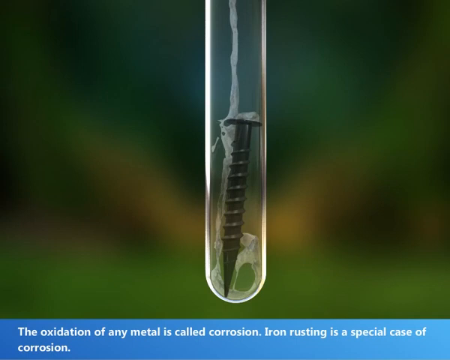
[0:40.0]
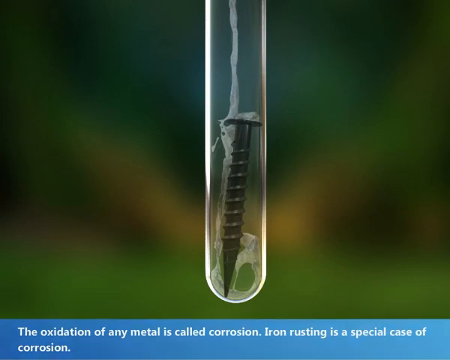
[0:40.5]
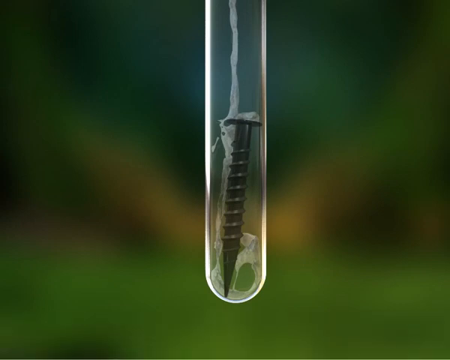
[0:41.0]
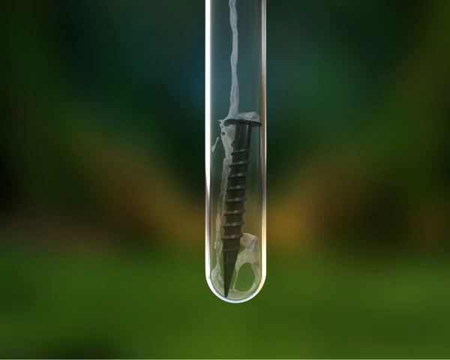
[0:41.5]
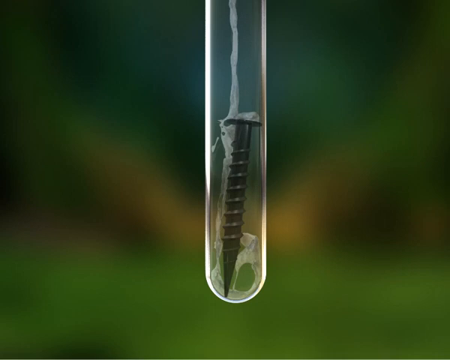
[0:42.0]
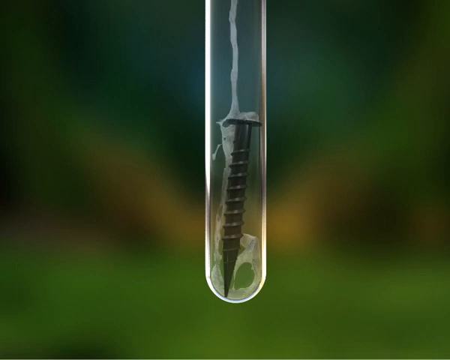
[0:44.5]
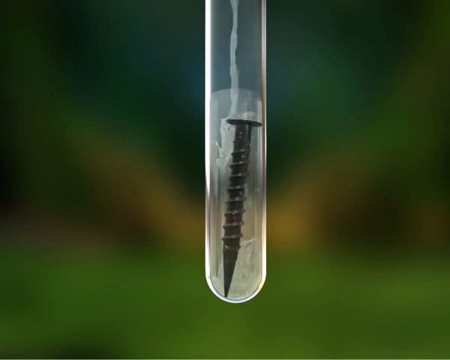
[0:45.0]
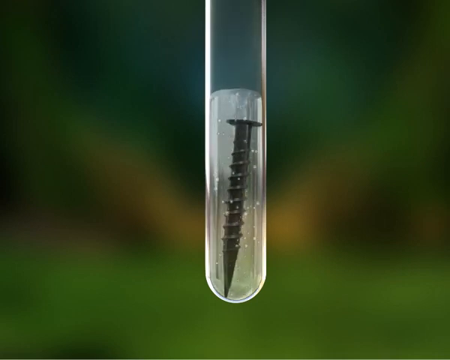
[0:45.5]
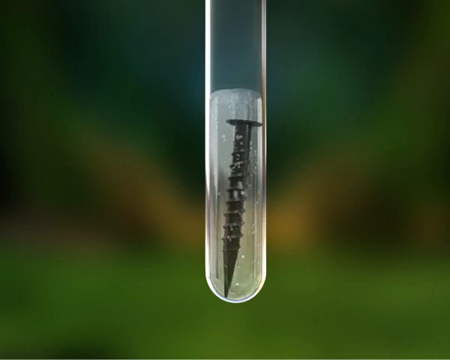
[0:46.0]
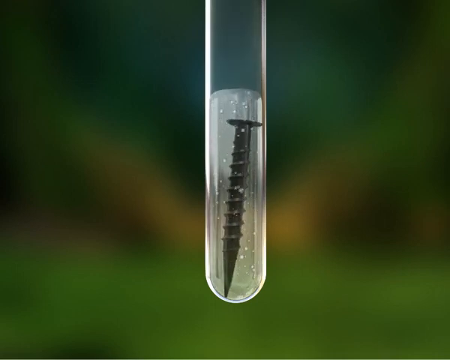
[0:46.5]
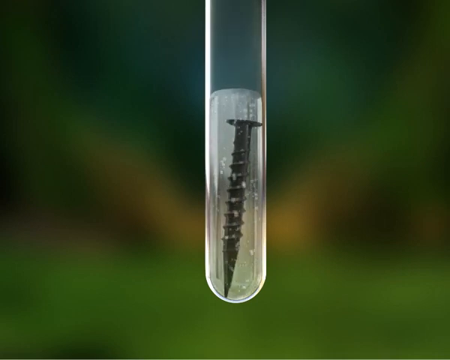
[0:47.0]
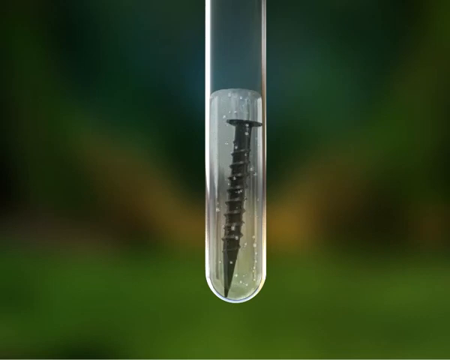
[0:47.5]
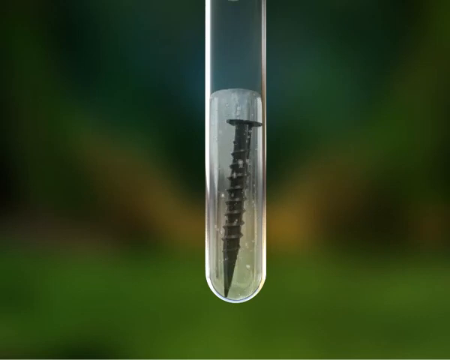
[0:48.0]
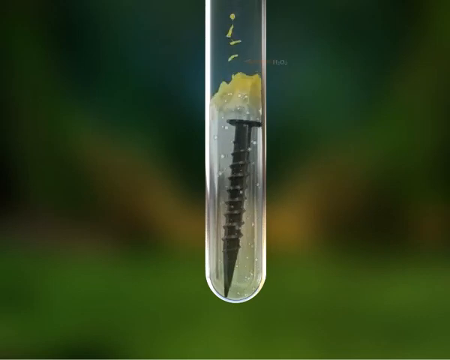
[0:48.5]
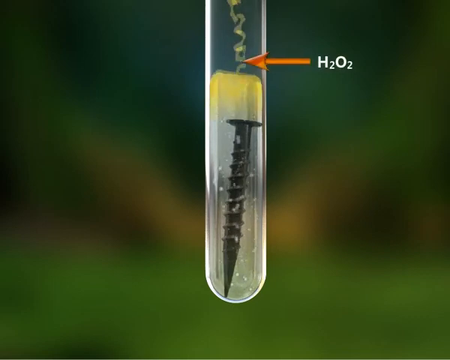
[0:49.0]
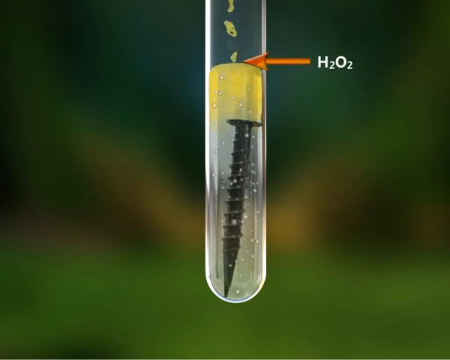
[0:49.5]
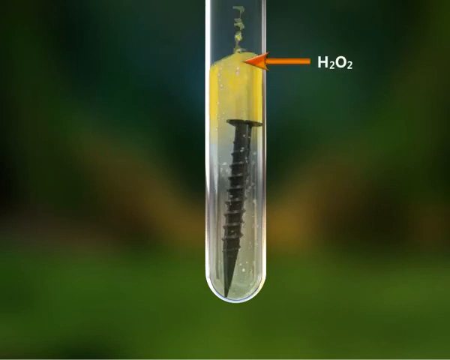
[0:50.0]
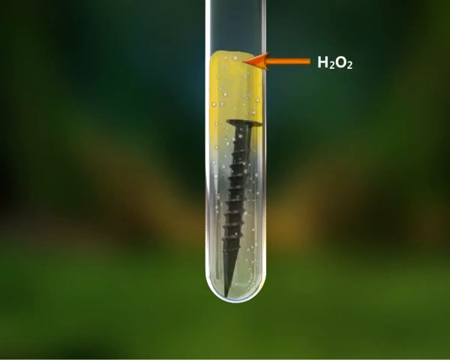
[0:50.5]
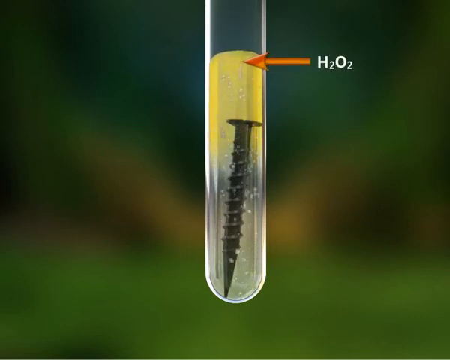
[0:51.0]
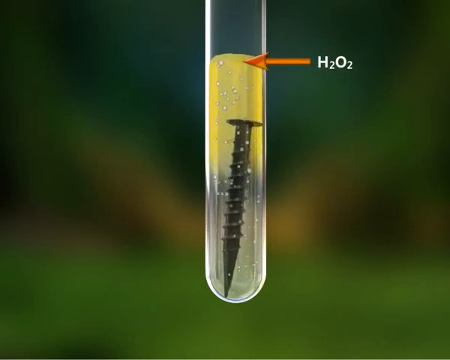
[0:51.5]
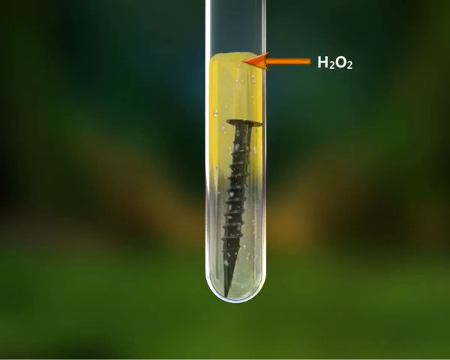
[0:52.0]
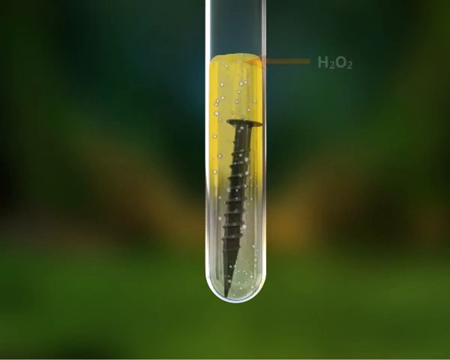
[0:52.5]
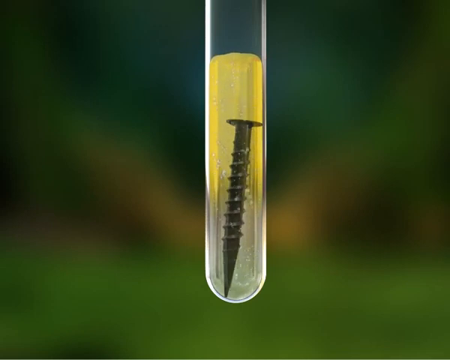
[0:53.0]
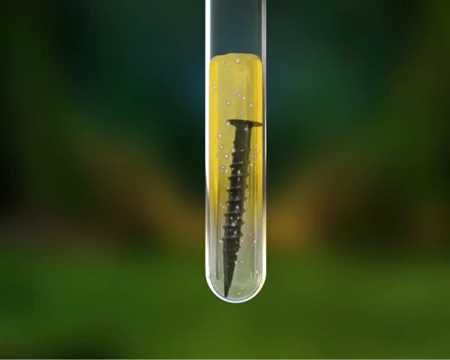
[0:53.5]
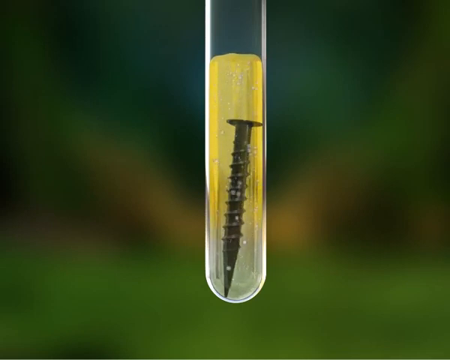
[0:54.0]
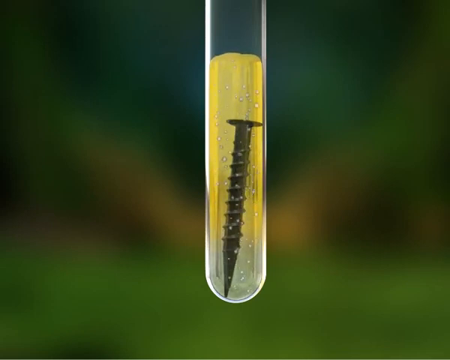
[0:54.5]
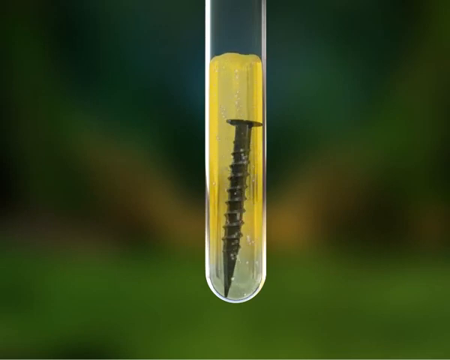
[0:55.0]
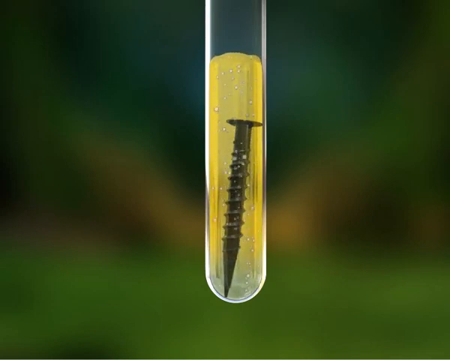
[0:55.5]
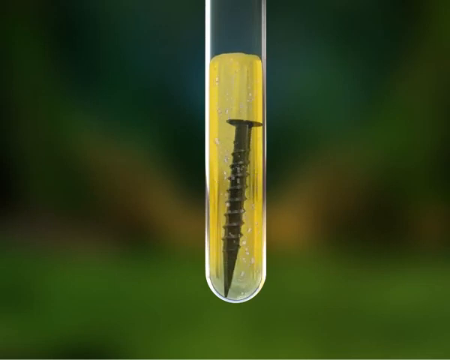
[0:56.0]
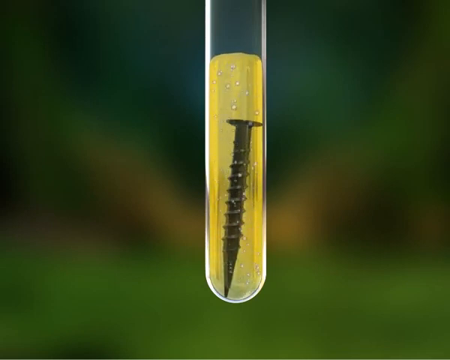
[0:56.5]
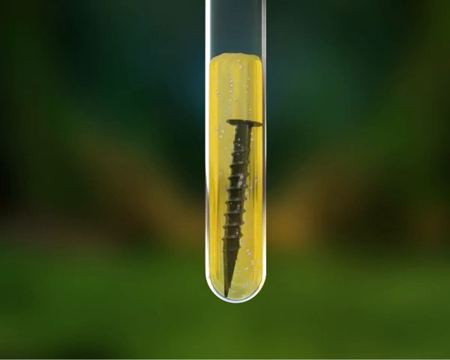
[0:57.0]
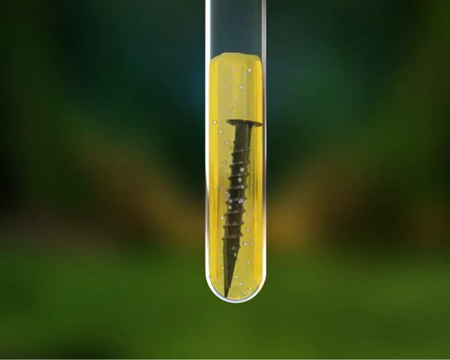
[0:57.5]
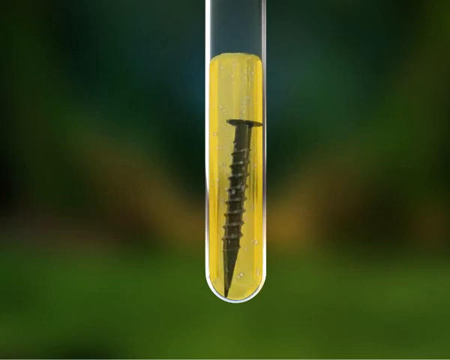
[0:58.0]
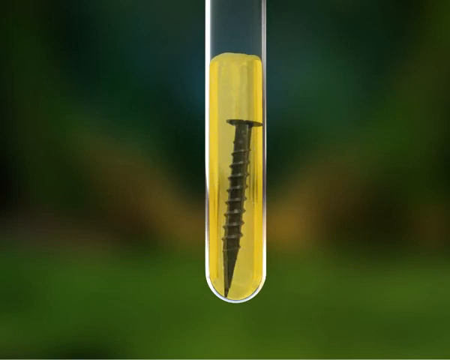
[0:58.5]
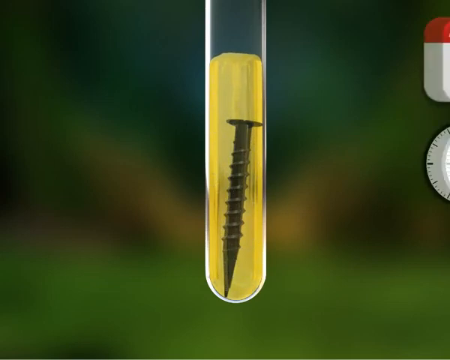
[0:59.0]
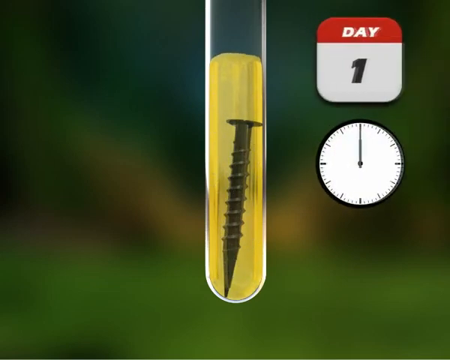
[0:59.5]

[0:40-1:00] White text at the bottom of the screen, with a blue border or background, reads "the oxidation of any metal is called corrosion. Iron rusting is a special case of corrosion." A vial with a black screw in it is shown, with water apparently being poured into the vial along with the screw. An elemental combination reading "H2O2" appears to the right of the vial. Some yellow substance forms above the water and starts to transform the rest of the water until it is all turning yellow. Bubbles emanate from the bottom of the vial and float to the top. The vial is clear and looks like it is made of clear glass, or maybe plastic. The background is a blurry green with a little bit of orange. A calendar appears at the top right with "day one" below it, and there is a clock.